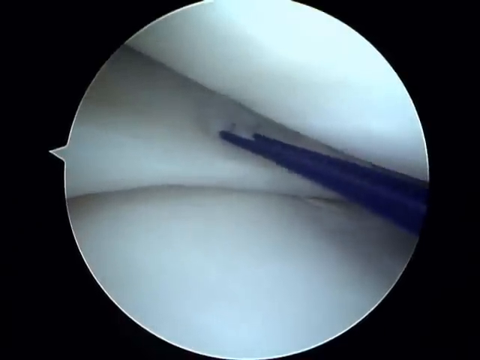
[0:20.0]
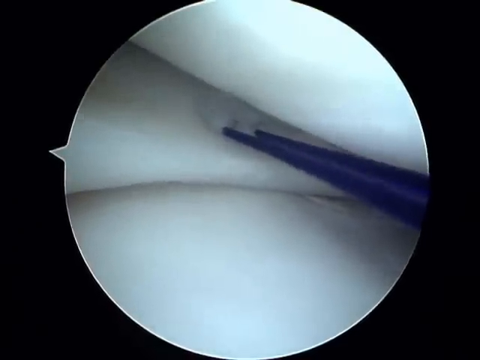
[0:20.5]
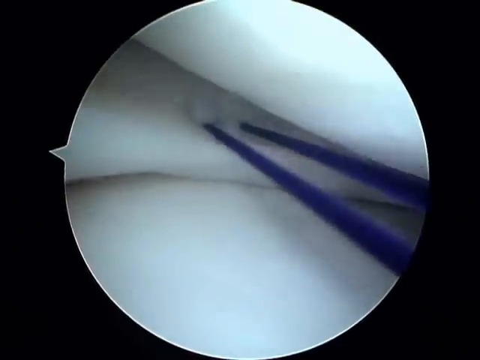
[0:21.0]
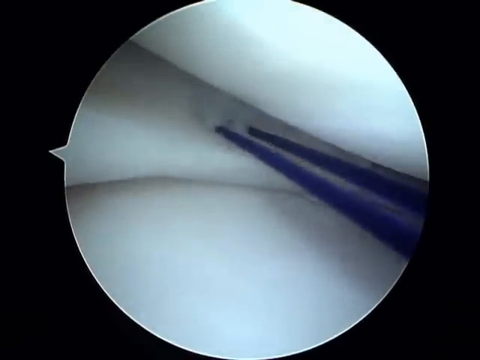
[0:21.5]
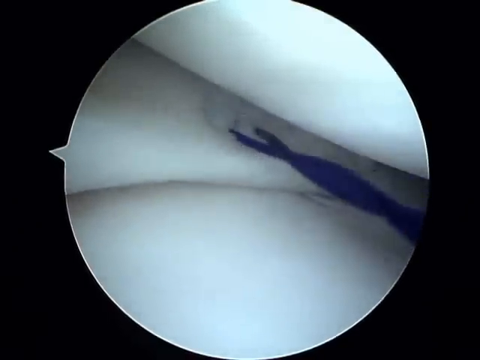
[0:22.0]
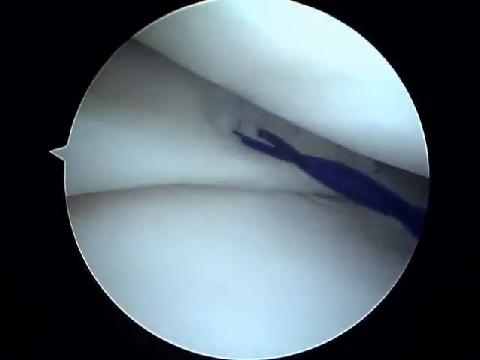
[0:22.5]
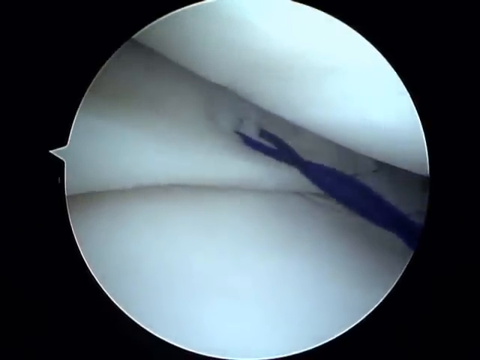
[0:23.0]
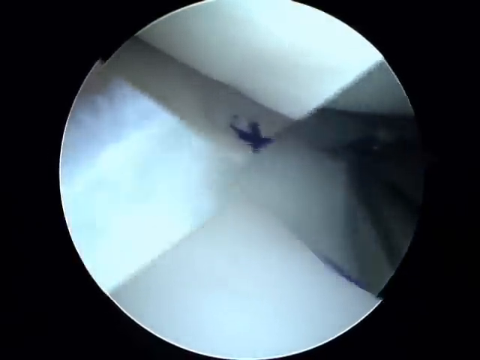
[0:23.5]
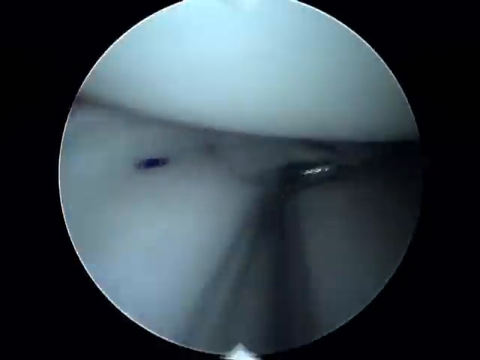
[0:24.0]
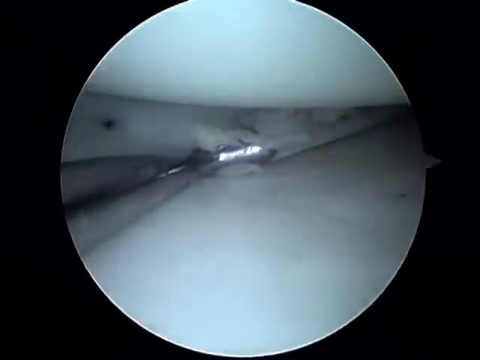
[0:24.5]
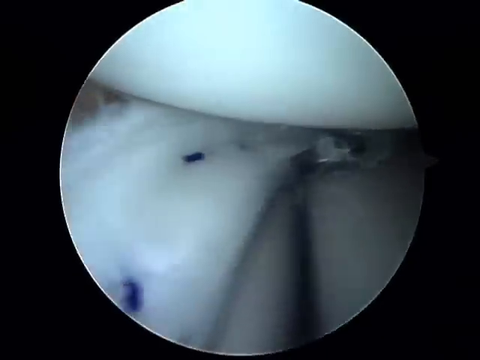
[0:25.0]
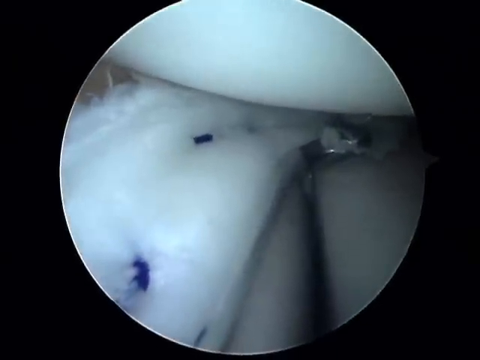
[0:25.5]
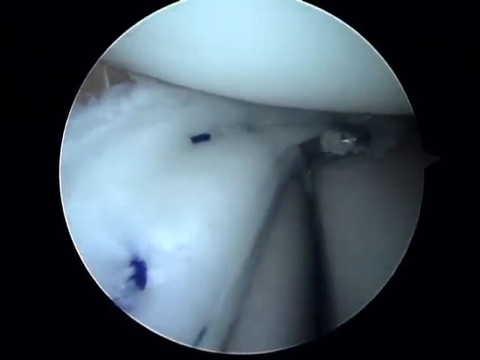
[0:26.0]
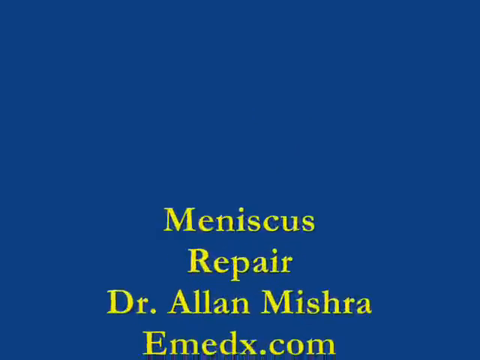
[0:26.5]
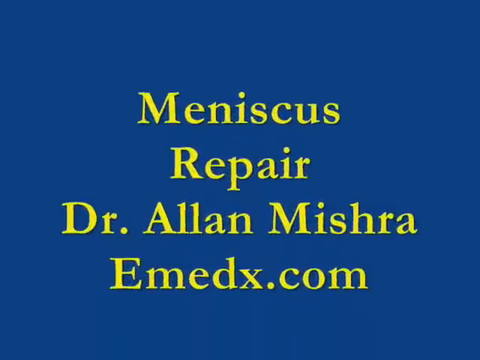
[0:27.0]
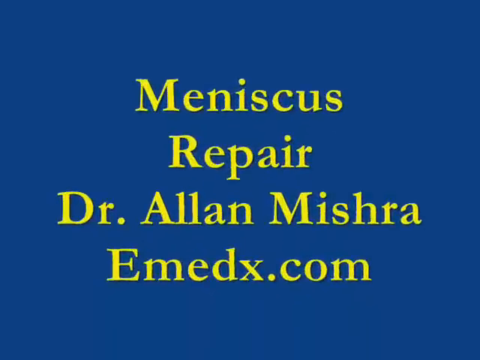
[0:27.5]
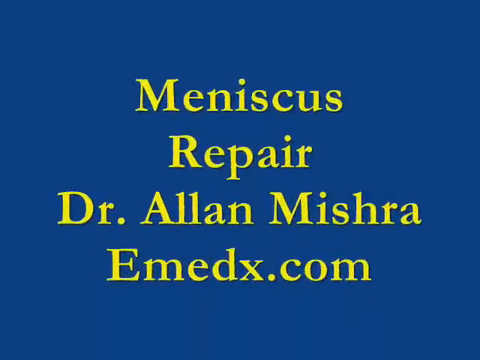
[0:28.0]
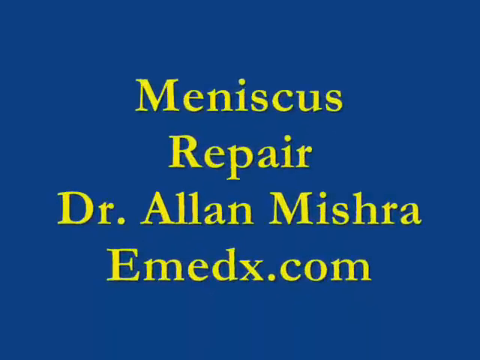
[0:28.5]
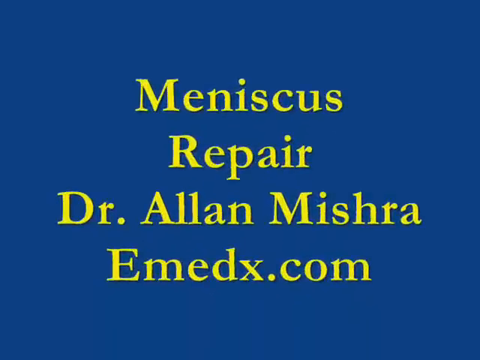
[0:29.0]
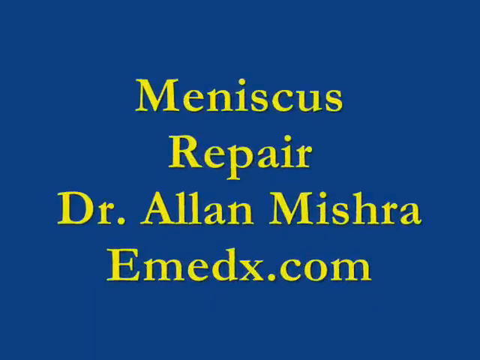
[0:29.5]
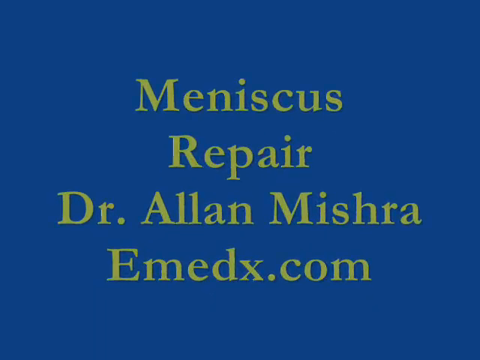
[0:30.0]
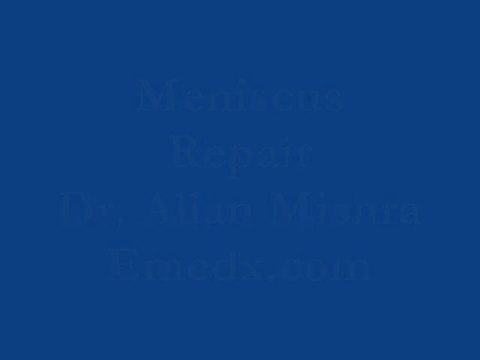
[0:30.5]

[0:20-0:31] What appears to be the camera view of a surgical procedure is shown. Within a circle of the camera are what appear to be white structures within the body, and what appear to be blue stitches are being put in. The view changes to a surgeon's metal instrument within the procedure, which looks like it is cutting something, possibly the stitch that was put in. The video then goes back to the blue screen seen at the beginning, with the words "Meniscus Repair Dr Alan Mitra emedx.com" in yellow, quite large font.